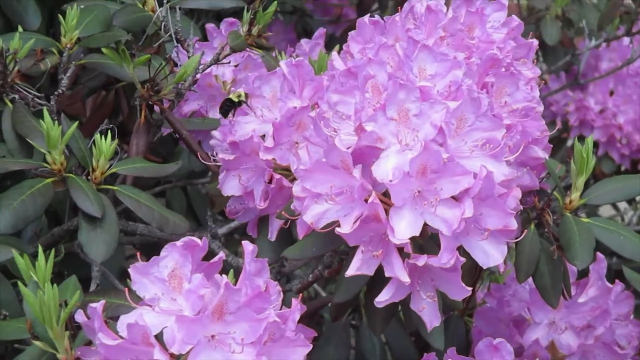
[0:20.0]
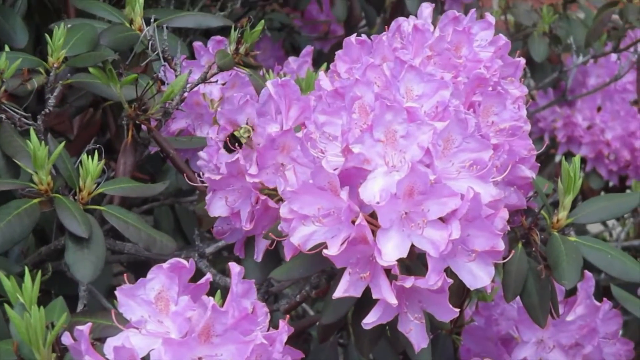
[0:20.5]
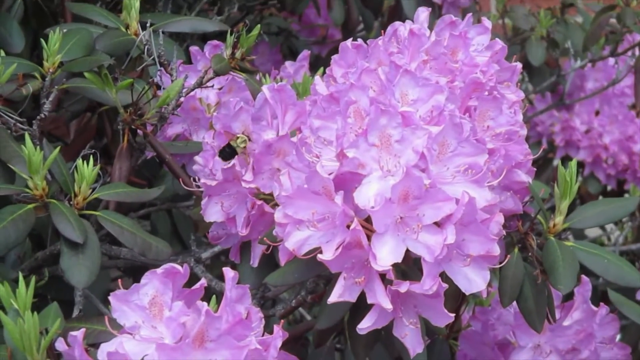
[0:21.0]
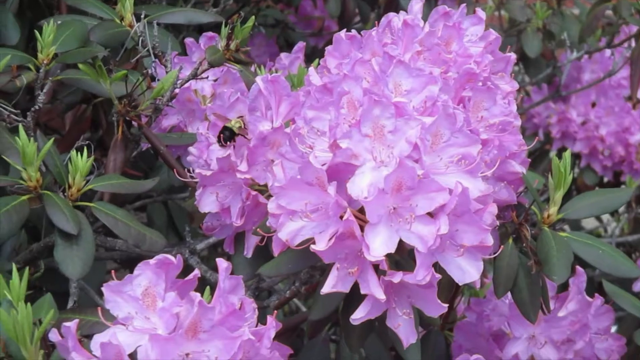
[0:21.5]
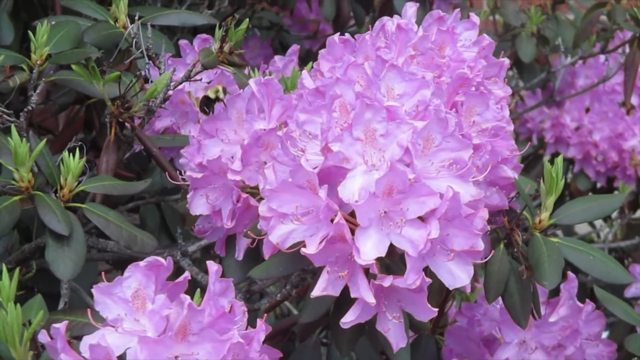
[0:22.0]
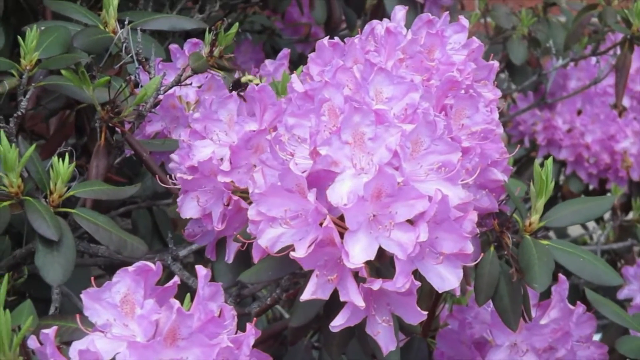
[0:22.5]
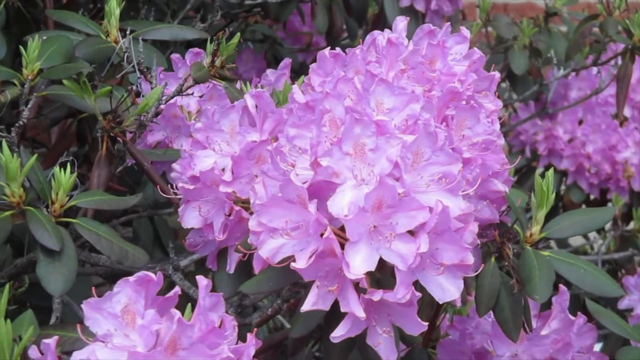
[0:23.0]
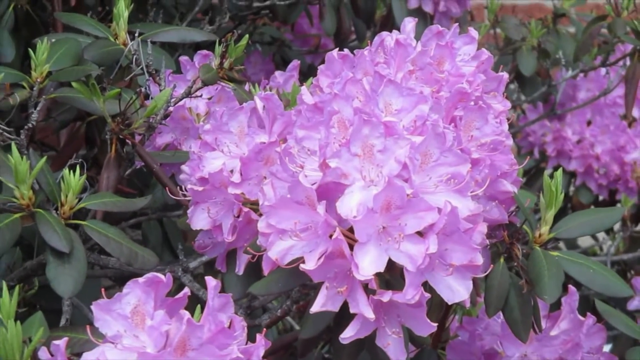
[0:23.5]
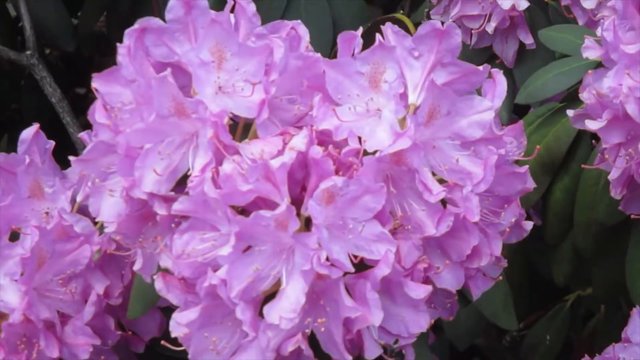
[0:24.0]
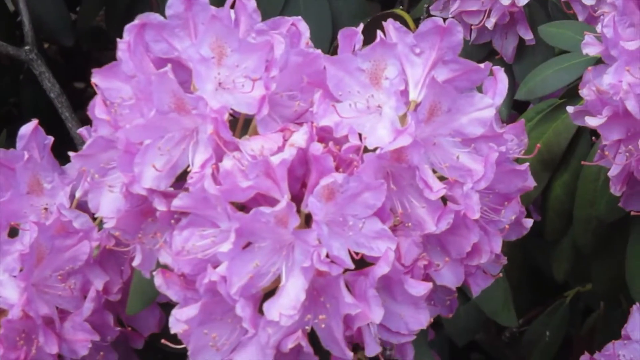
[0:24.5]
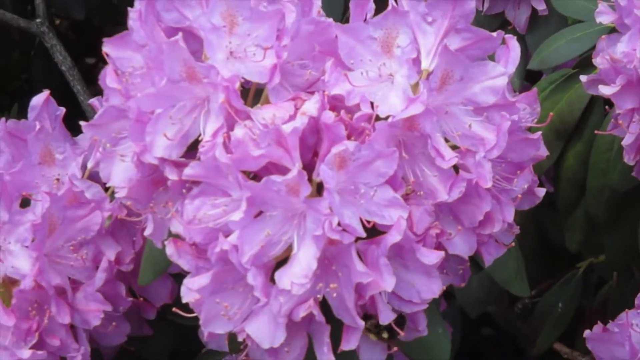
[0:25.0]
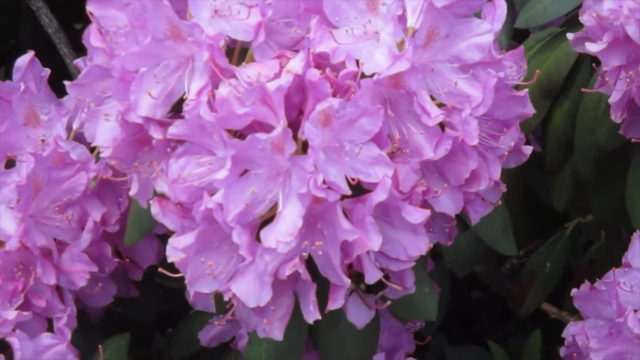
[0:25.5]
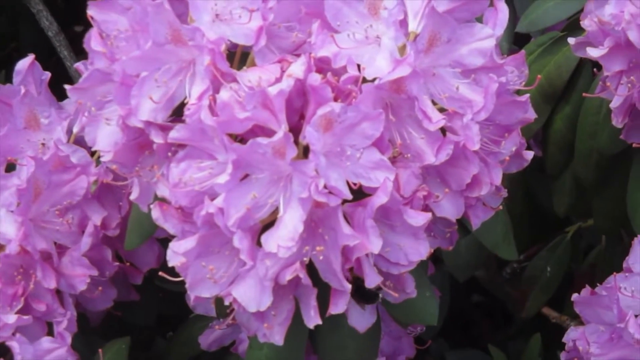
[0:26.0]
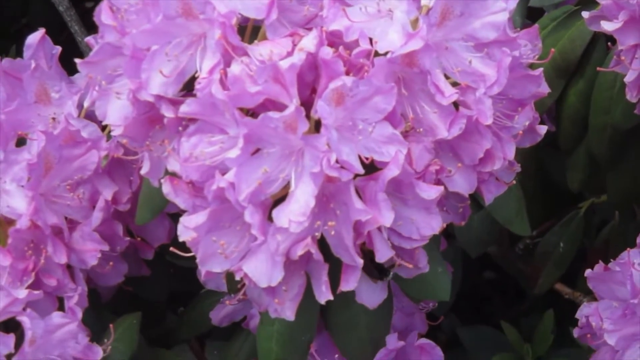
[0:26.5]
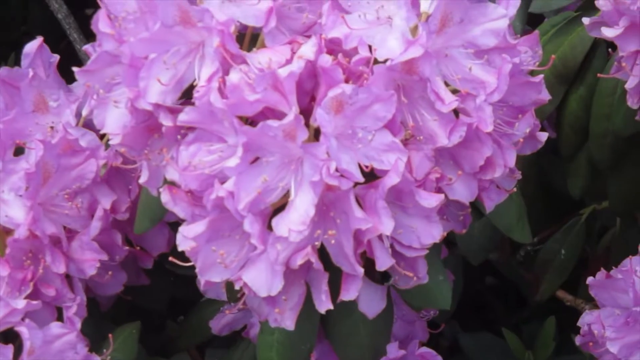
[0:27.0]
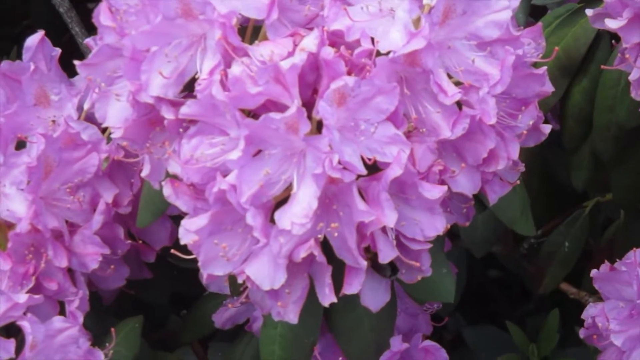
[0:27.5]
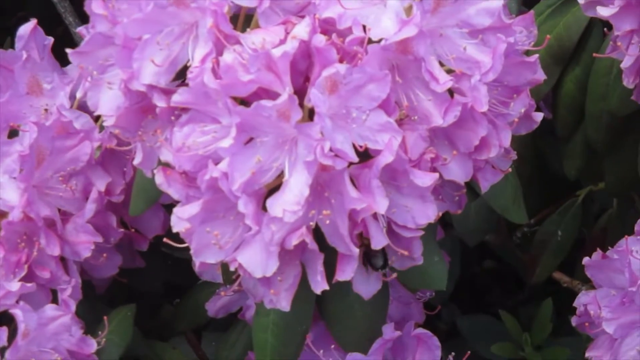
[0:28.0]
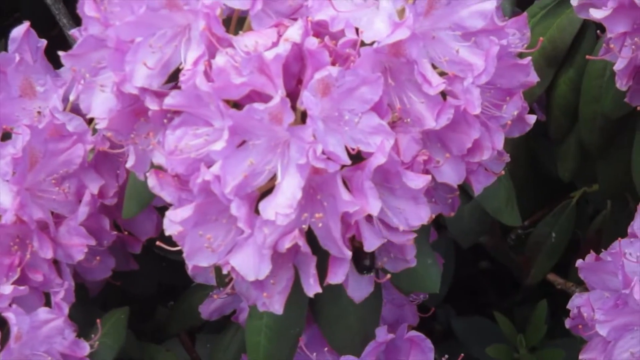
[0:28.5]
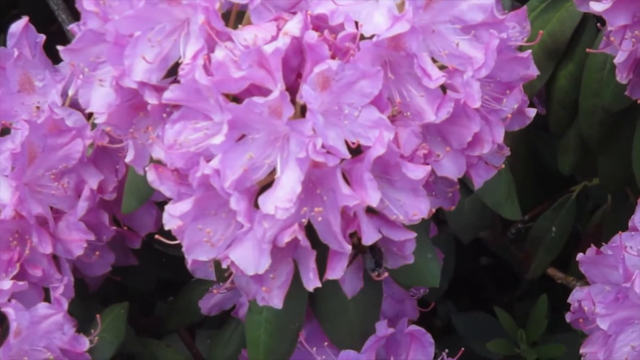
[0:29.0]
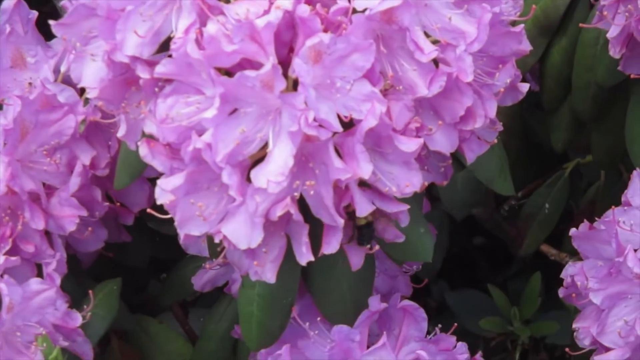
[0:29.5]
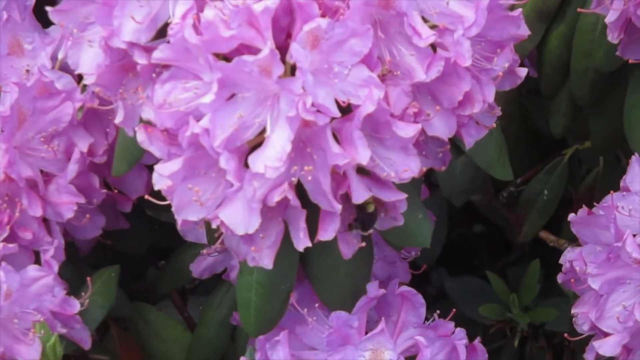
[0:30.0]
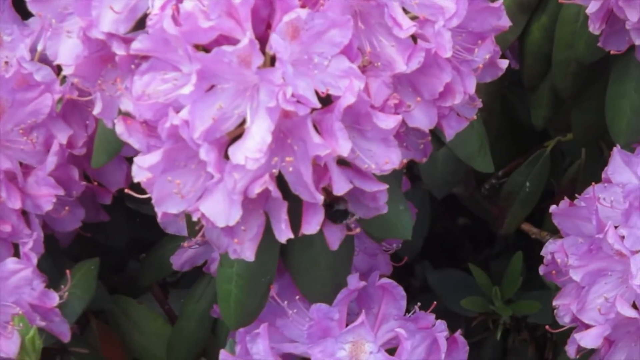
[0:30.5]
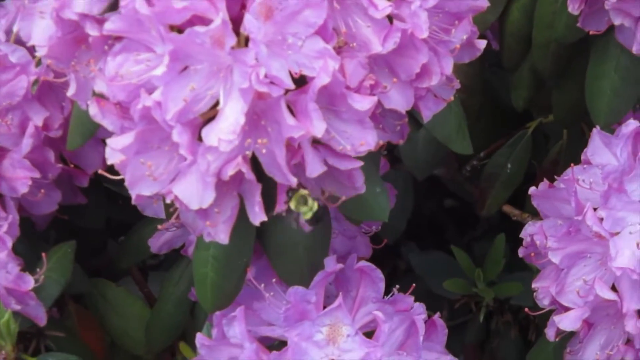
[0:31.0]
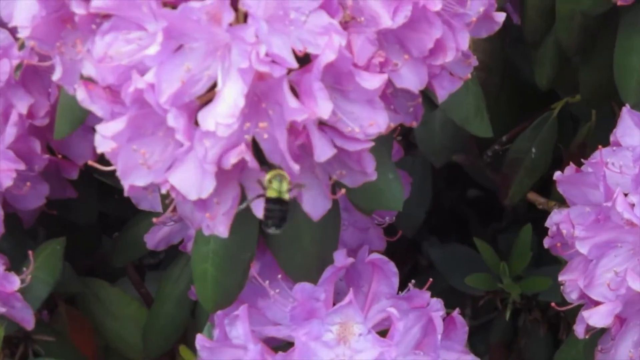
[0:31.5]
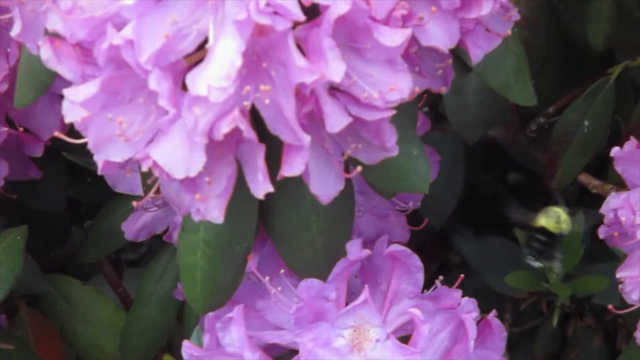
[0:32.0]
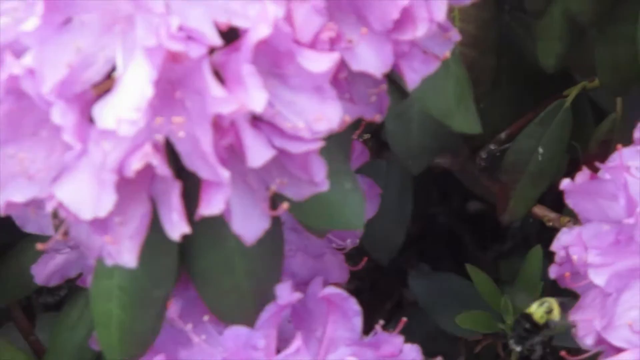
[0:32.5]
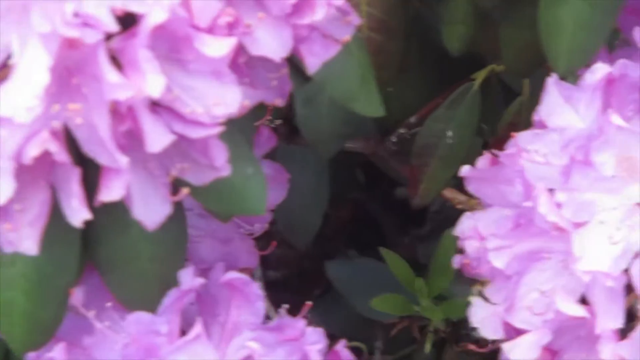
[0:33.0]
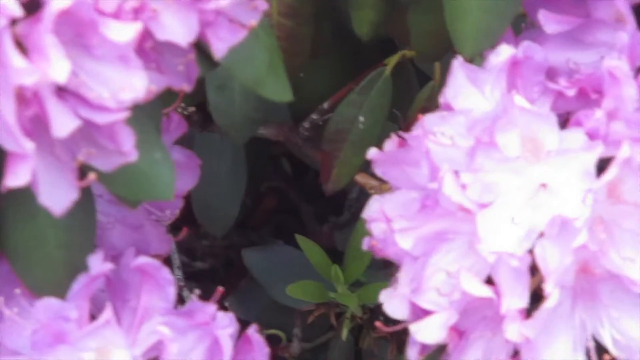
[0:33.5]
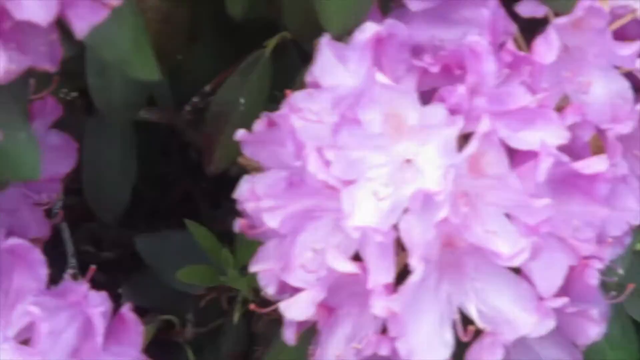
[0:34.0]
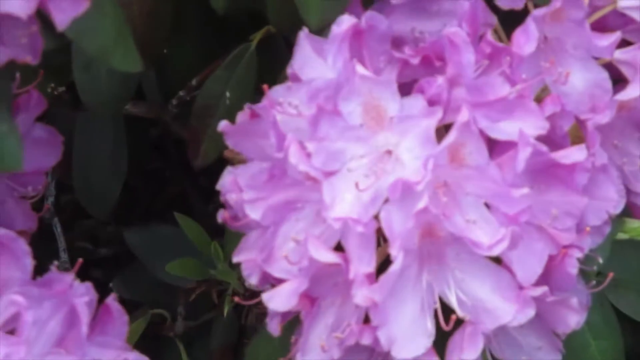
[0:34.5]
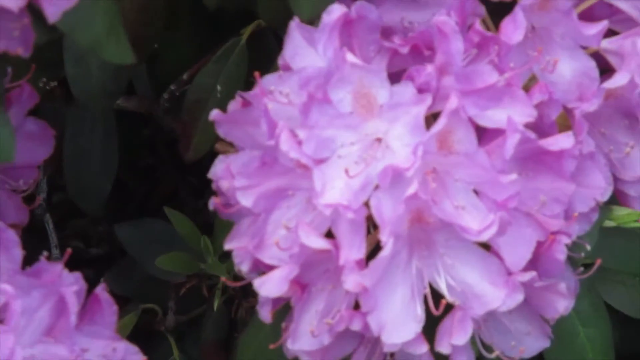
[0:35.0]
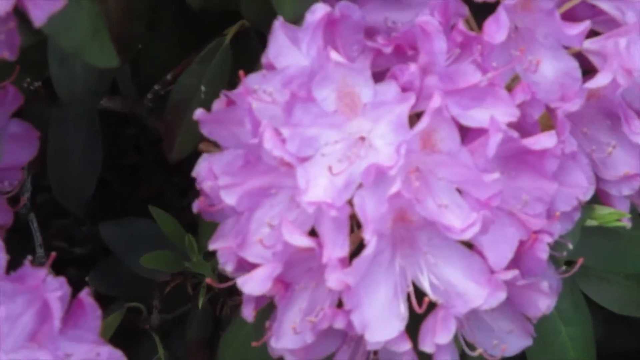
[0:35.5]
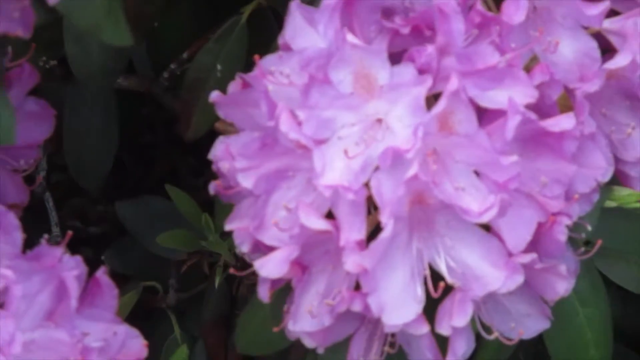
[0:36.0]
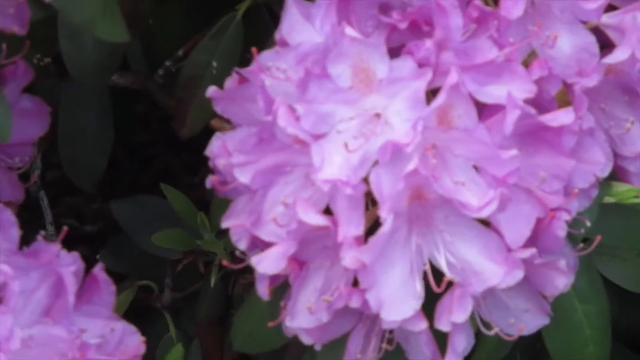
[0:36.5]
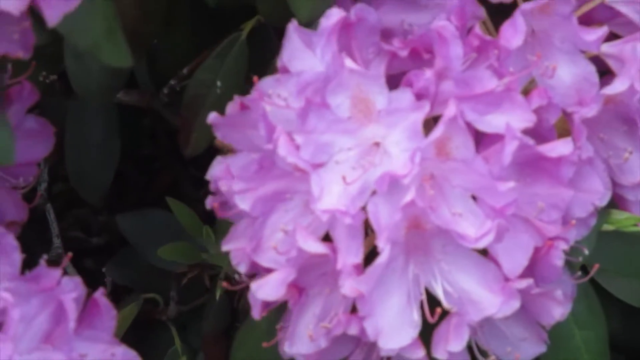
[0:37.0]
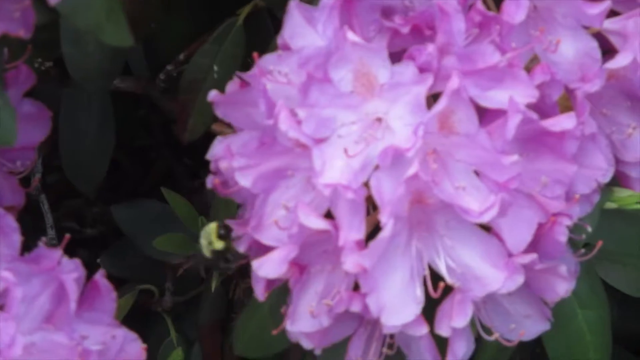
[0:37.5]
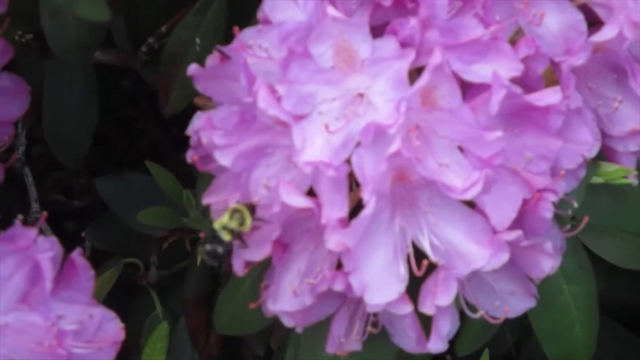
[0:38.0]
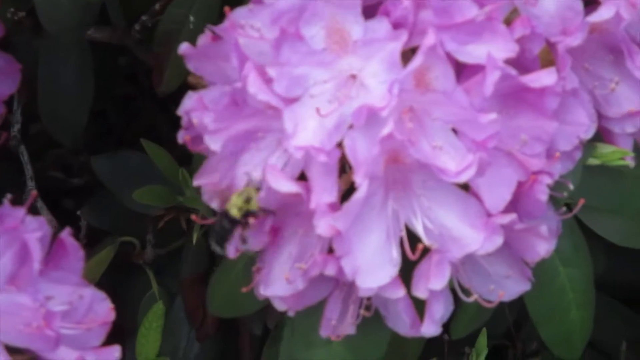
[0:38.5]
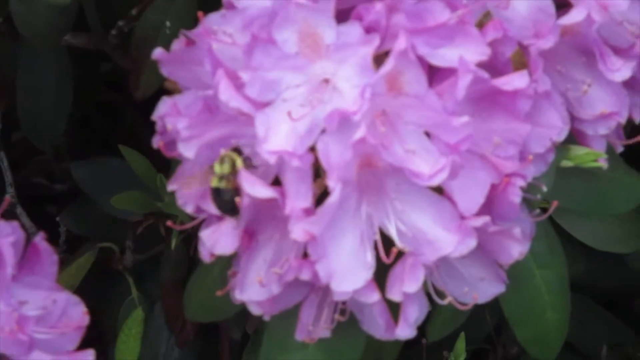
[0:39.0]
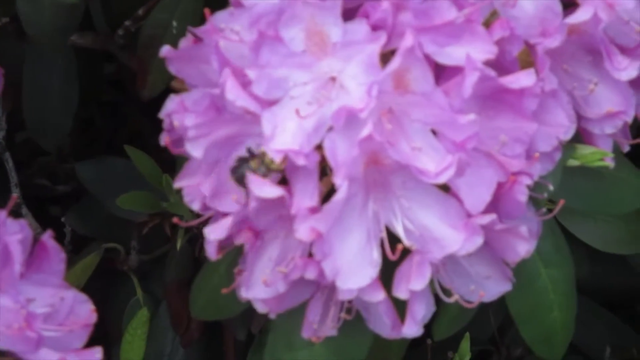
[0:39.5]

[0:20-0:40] The shot starts on a large cluster of rhododendrons, with the bee crawling on them and flying a little. It cuts to another shaky close-up of a rhododendron, where a bee crawls at the base of one of the flowers. The yellow and black bee flies around, rapidly moving its arms and wings, going from one flower to the next as the camera tries to follow it. The camera is very shaky this closely zoomed in, but the bee is fairly clearly visible; it is zoomed in so far that the bee would be about life-size on most computer screens.